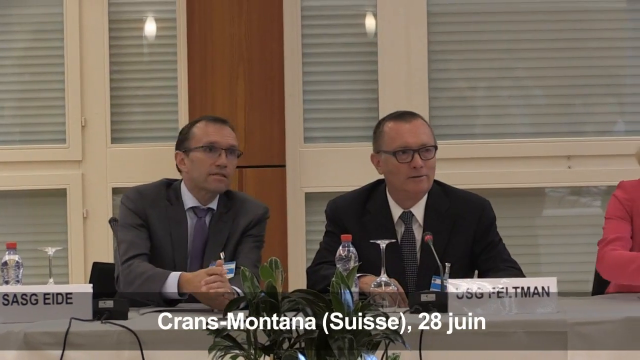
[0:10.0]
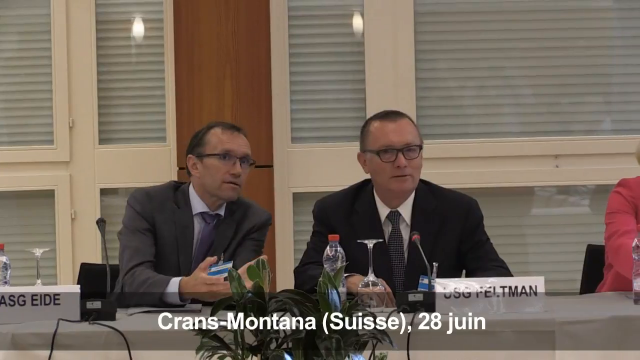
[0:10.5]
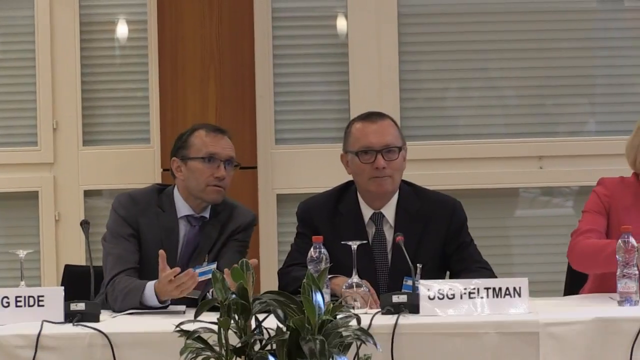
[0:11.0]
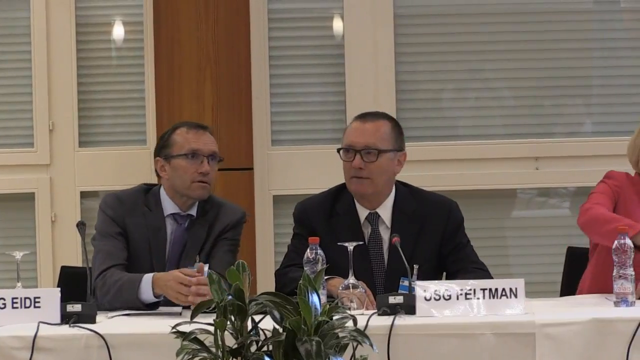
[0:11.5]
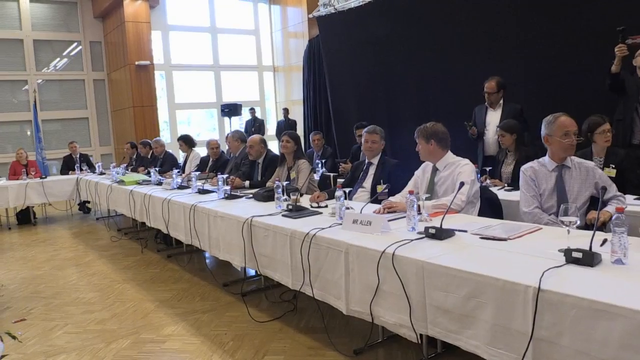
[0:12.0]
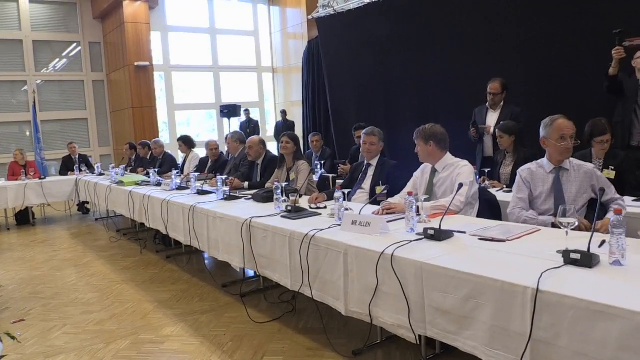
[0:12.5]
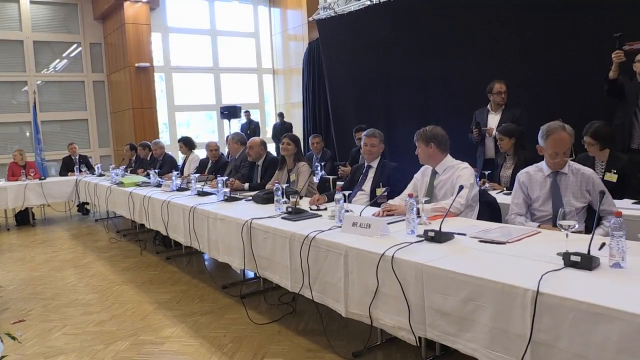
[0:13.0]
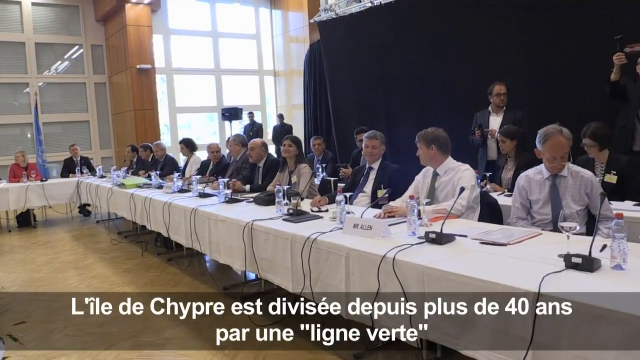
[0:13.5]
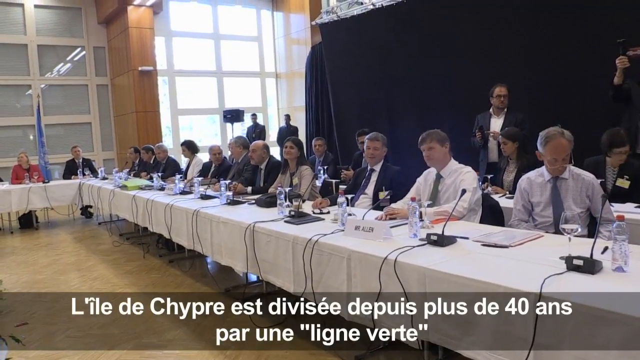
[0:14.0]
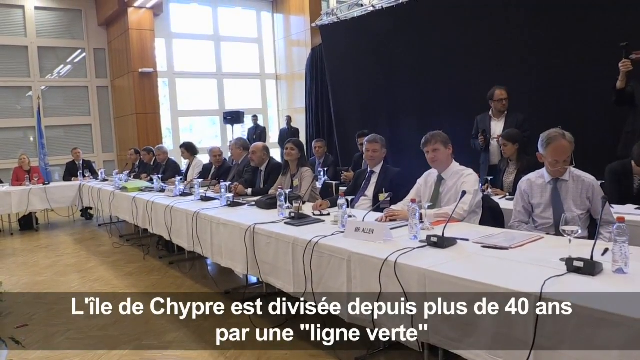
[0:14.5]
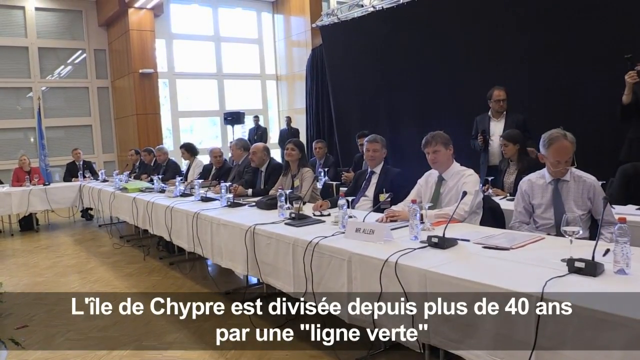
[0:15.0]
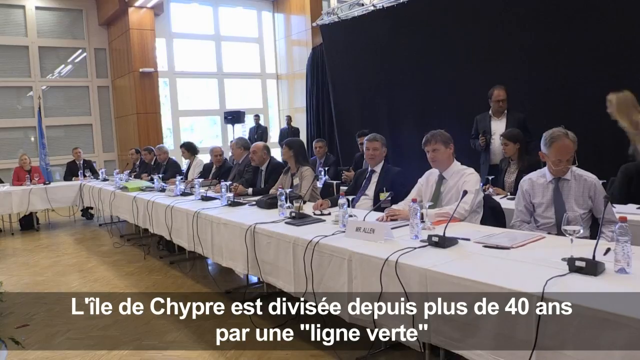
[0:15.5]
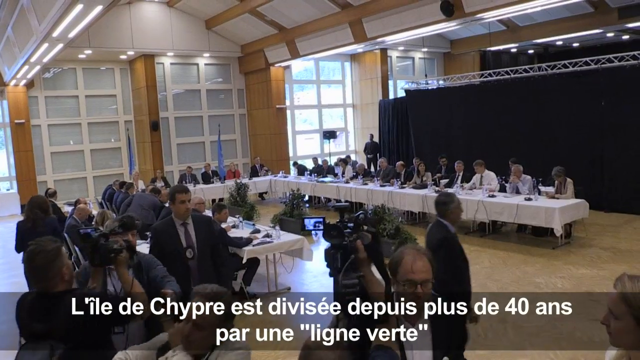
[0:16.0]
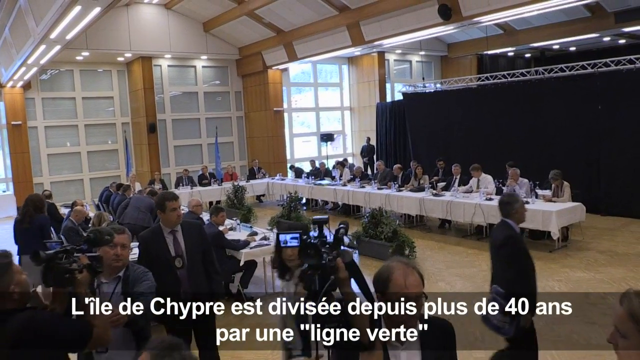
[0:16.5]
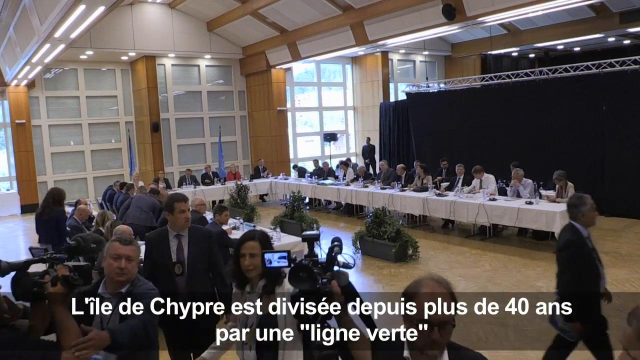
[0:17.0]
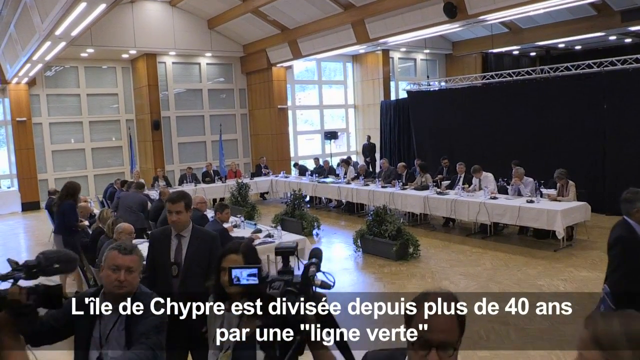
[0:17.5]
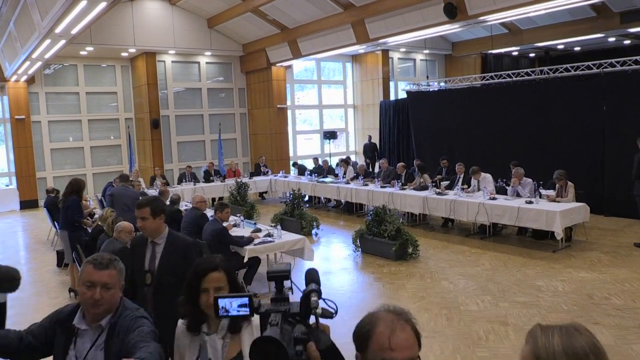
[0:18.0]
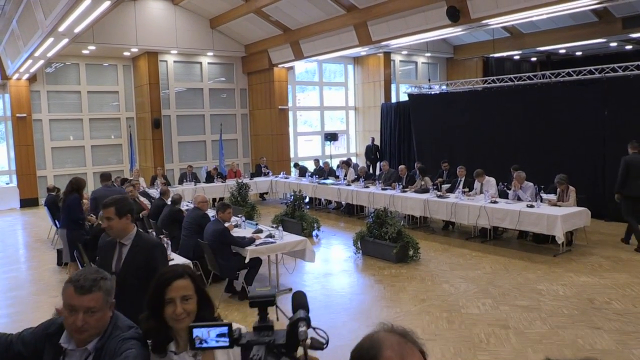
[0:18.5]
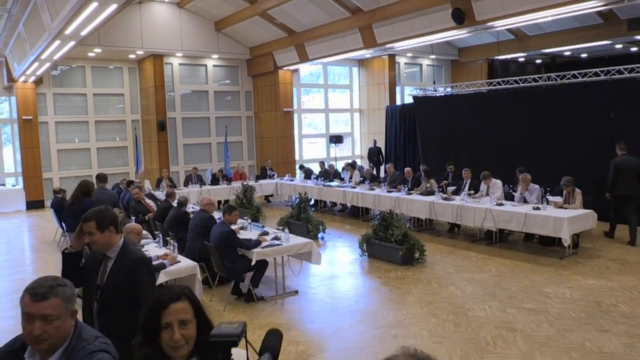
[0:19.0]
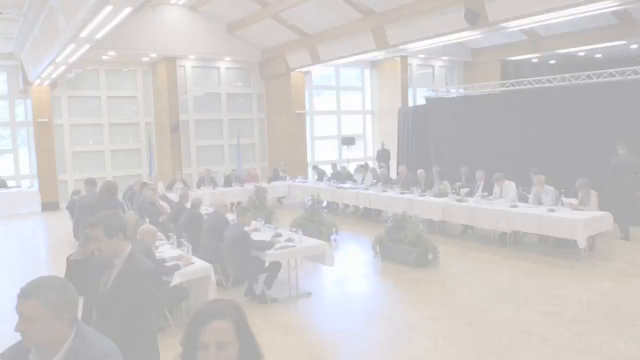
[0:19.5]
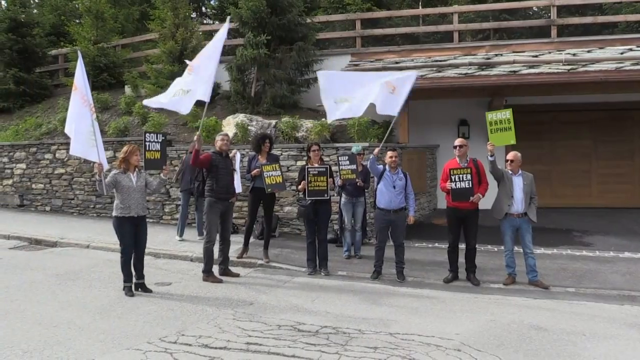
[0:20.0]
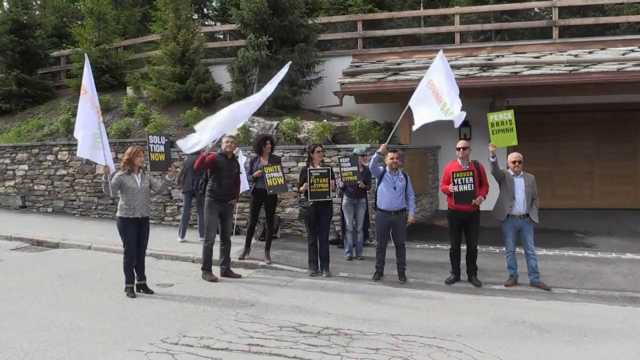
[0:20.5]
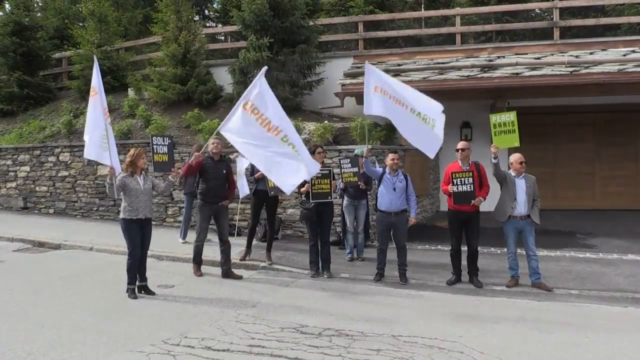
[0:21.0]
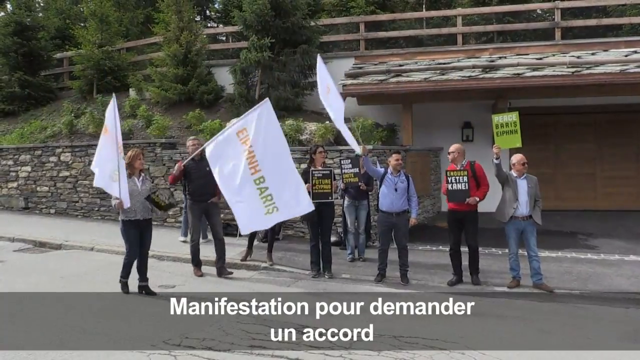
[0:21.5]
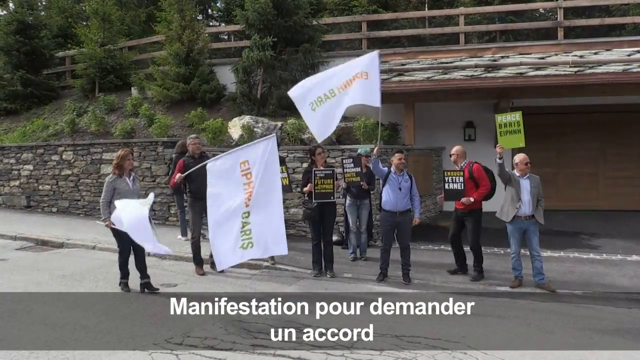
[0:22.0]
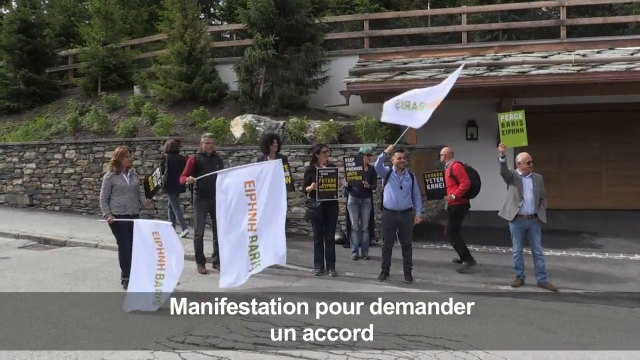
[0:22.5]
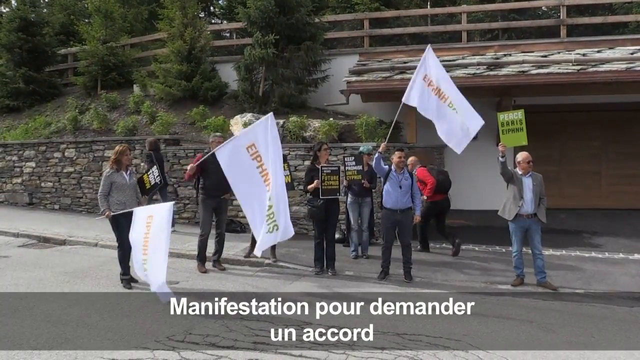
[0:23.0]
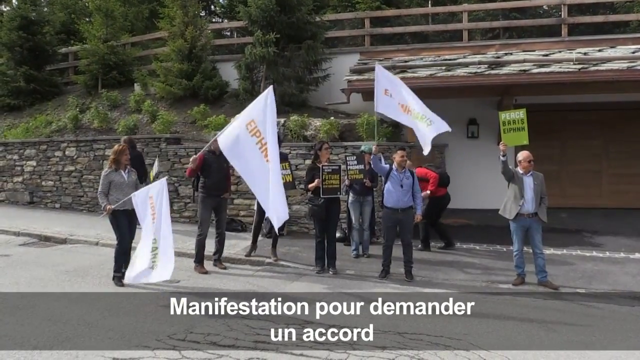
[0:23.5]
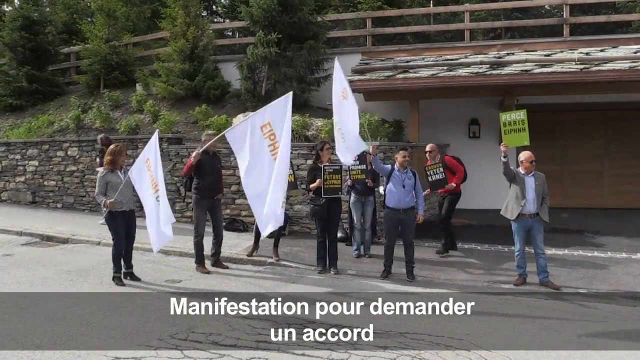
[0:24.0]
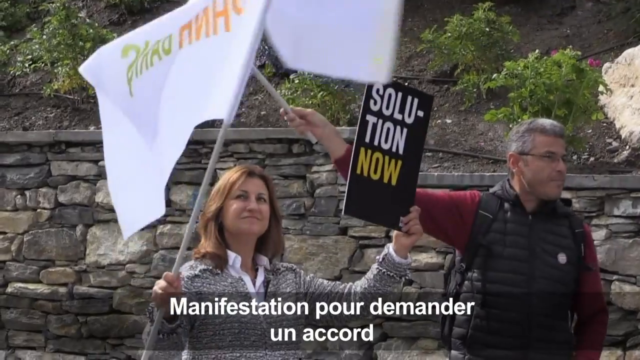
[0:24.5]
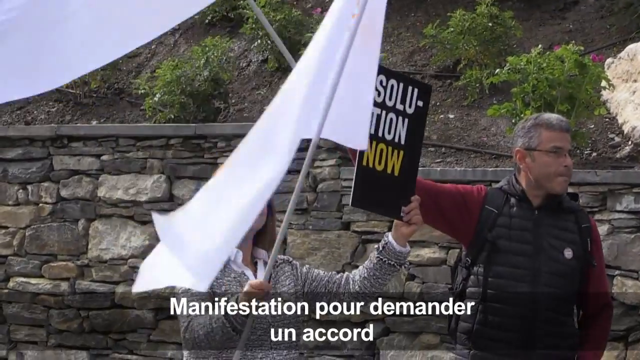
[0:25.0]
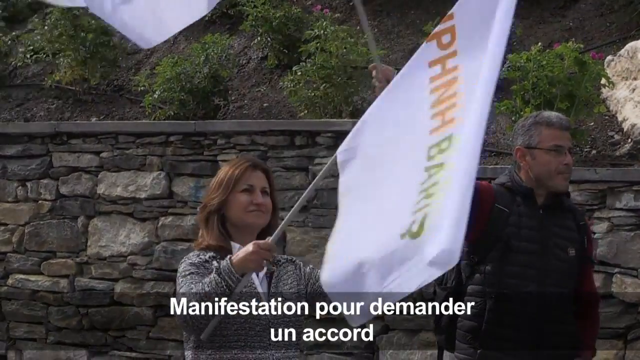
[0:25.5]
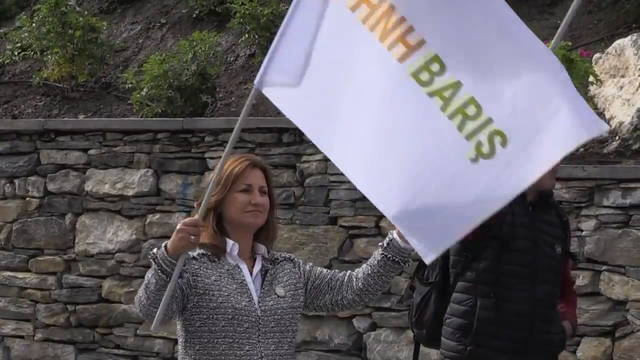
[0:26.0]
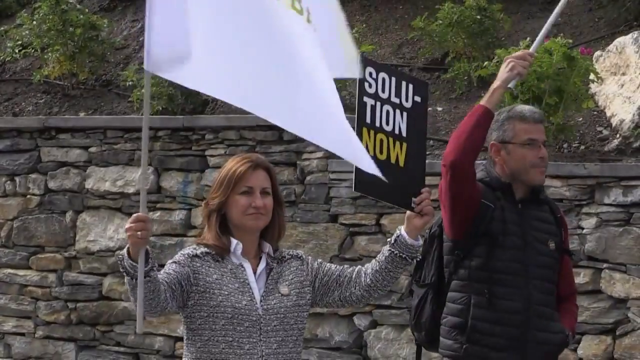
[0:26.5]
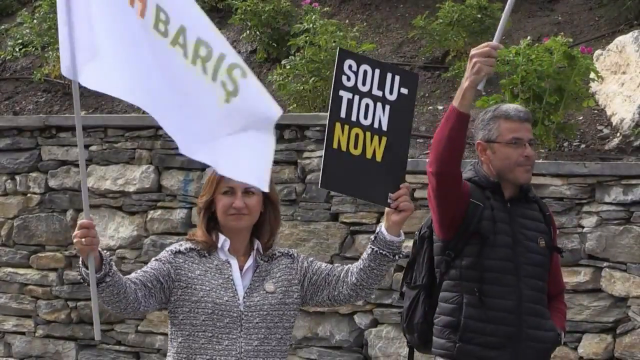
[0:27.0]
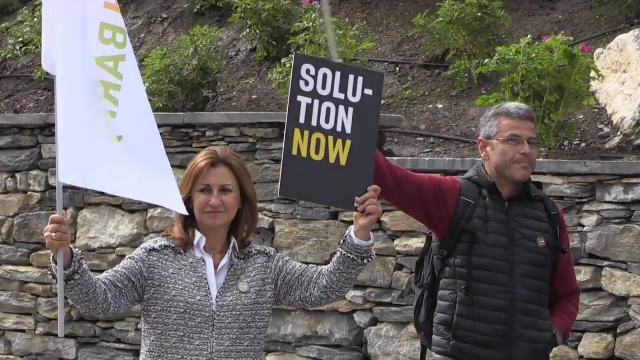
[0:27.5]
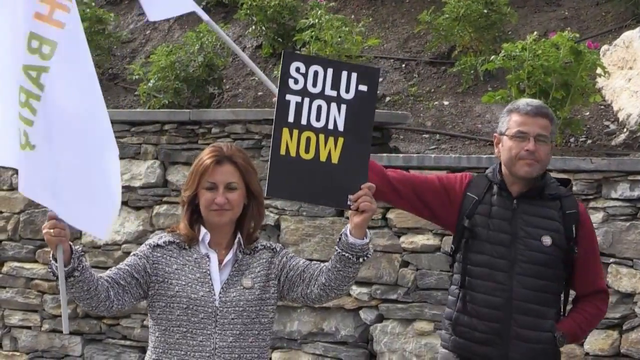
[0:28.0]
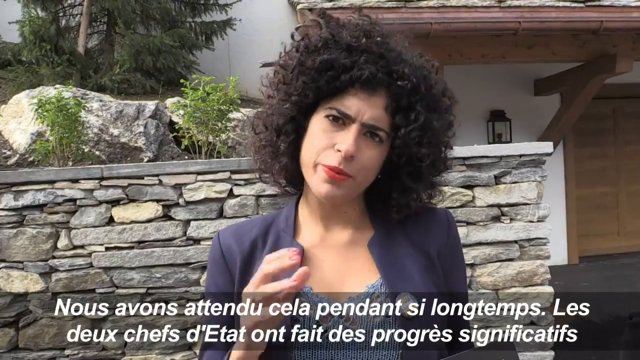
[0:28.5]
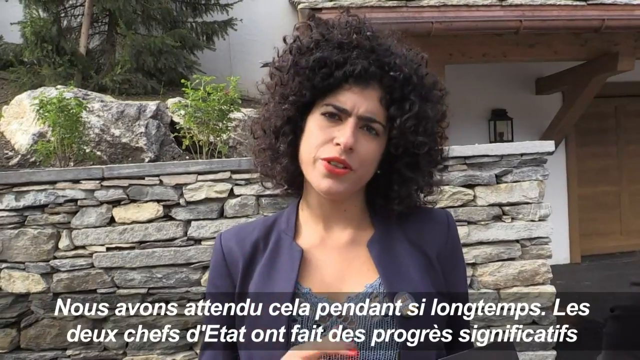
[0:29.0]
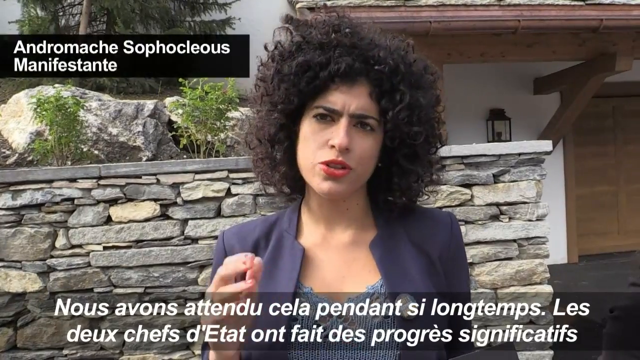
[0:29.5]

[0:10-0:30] A close shot shows two white men in dark suits at the conference. The one on the left leans towards the one on the right and is speaking, apparently not into the microphone but perhaps to one of the other people at the table. The next image shows the right side of the U of conference tables, where about a dozen people sit at a table with a white tablecloth; there is something that may be a translating device or may just be holding a microphone. Behind the people seated at this long table is another line of conference tables, possibly for transcribers, and a couple of journalists stand back there. Then, from the left side of the room facing the U, people are leaving the conference room; they appear to all be journalists. Some carry big video cameras on their shoulders, they have press badges, and one woman carries out a tripod with a camera on it. They move towards the camera without saying anything. Behind each side of the U is a second line of tables, where perhaps aides or transcribers sit behind the people they are helping. The scene shifts to eight, nine or ten casually dressed protesters outside a building with a stone wall. They hold signs in a language other than English, and three of them wave white flags. In a brief final shot, a woman, perhaps a reporter, with lots of curly dark hair and a blue suit speaks directly into the camera, with captions on screen that are not in English.